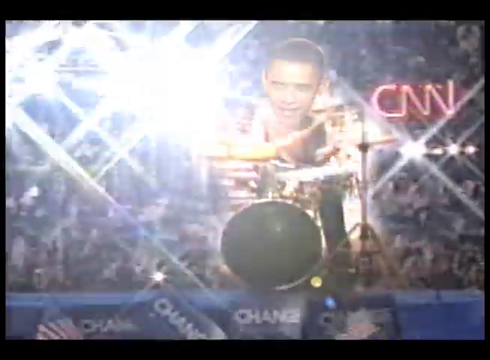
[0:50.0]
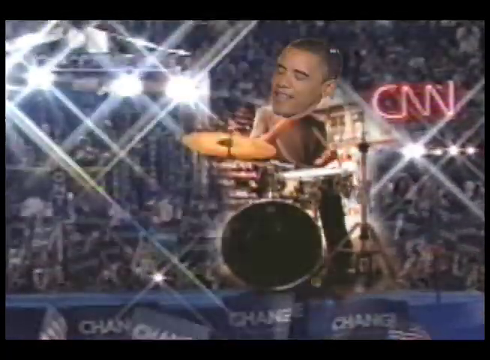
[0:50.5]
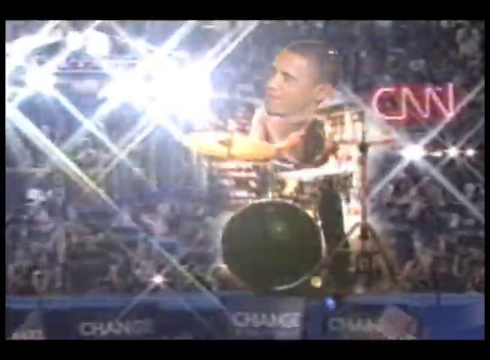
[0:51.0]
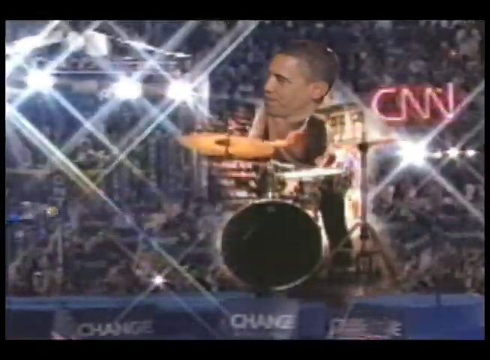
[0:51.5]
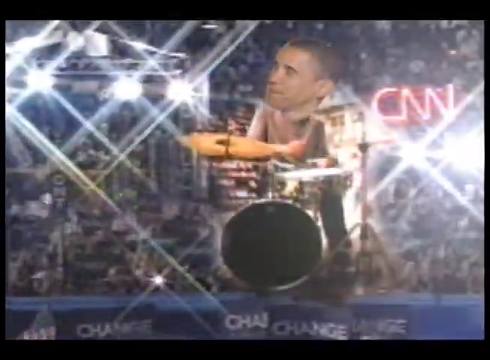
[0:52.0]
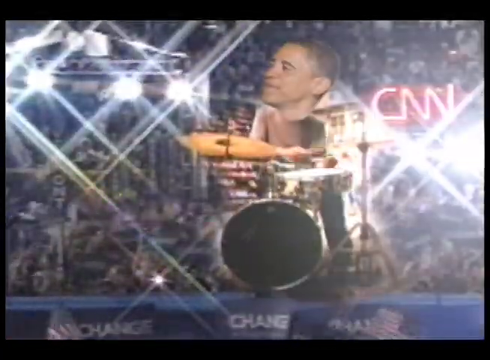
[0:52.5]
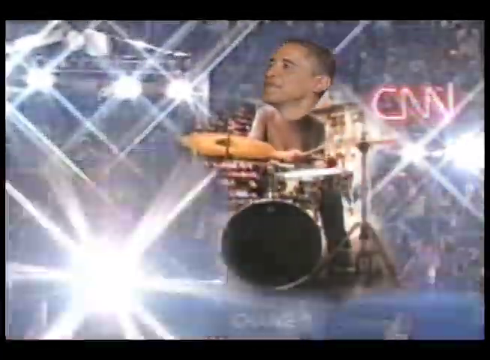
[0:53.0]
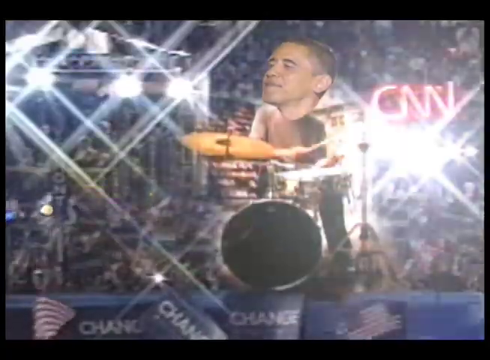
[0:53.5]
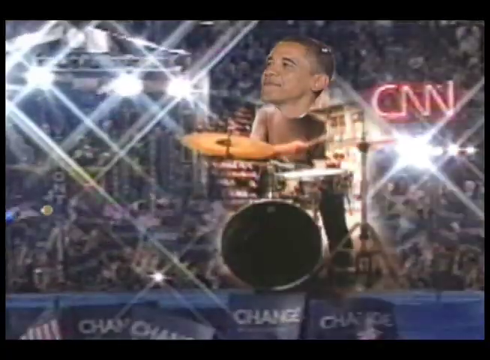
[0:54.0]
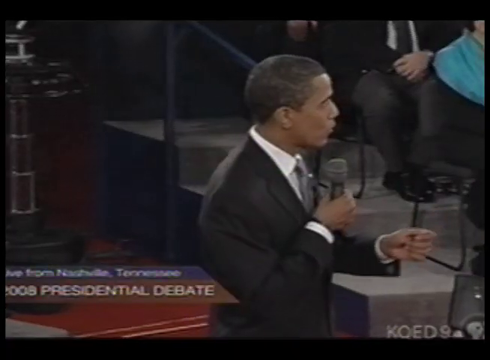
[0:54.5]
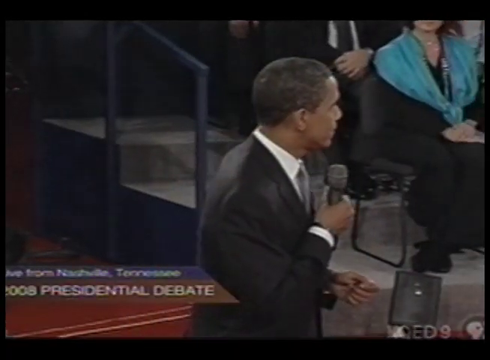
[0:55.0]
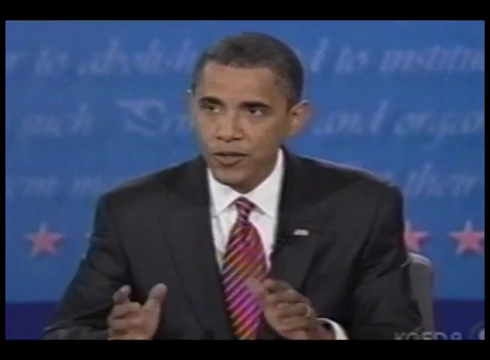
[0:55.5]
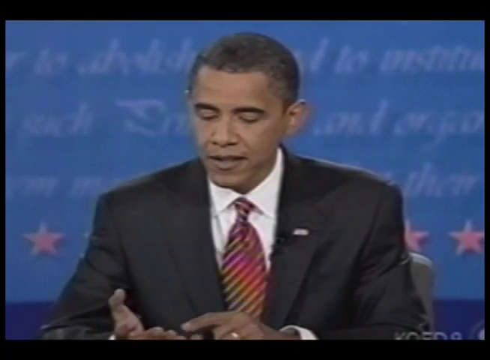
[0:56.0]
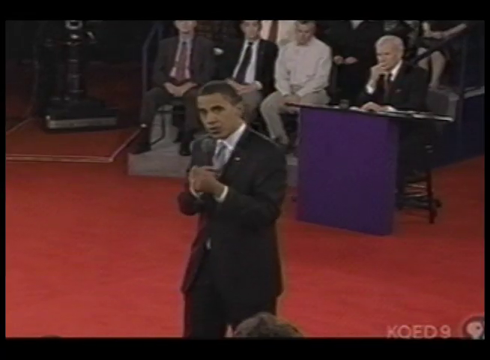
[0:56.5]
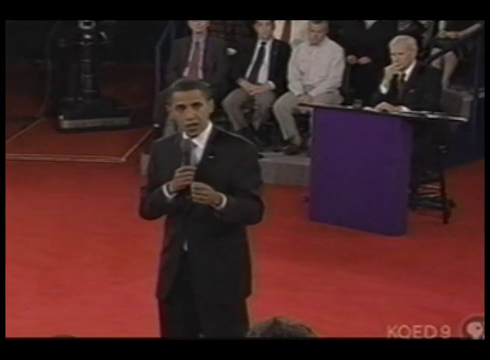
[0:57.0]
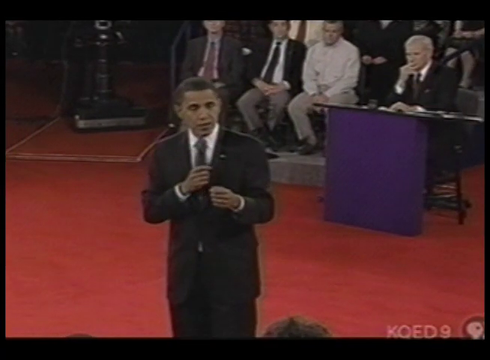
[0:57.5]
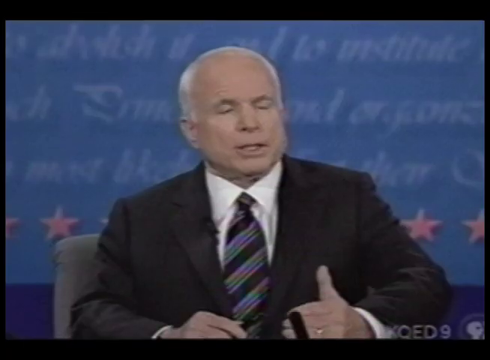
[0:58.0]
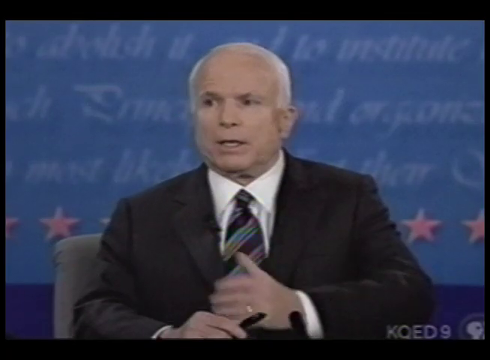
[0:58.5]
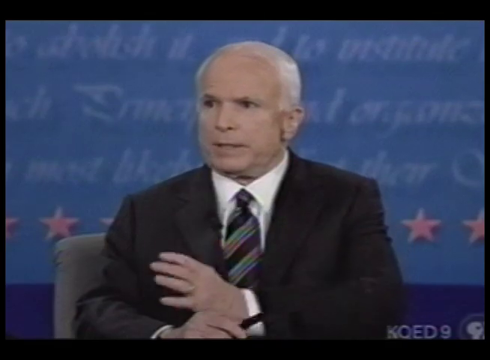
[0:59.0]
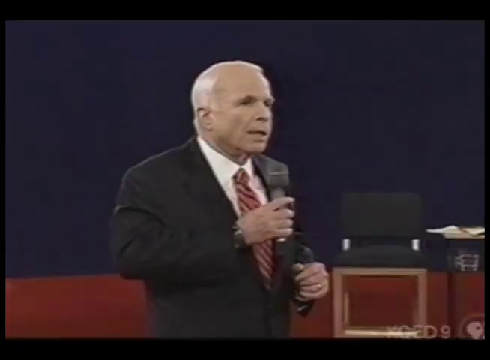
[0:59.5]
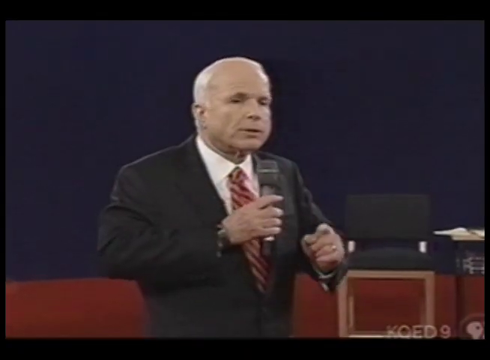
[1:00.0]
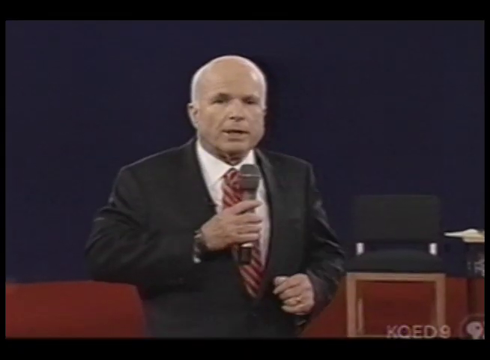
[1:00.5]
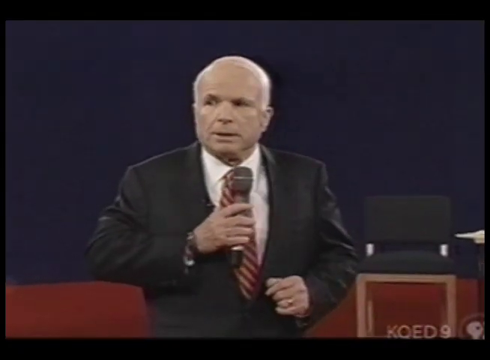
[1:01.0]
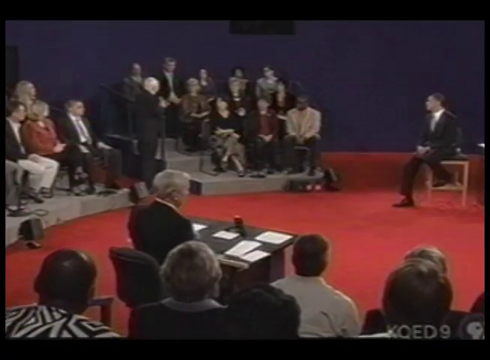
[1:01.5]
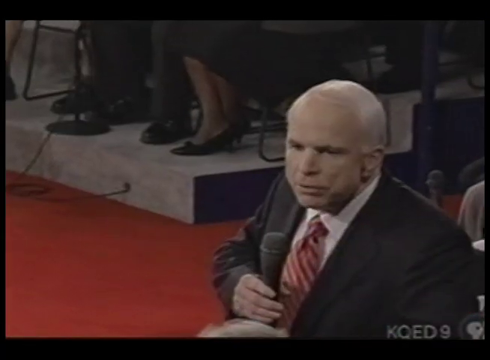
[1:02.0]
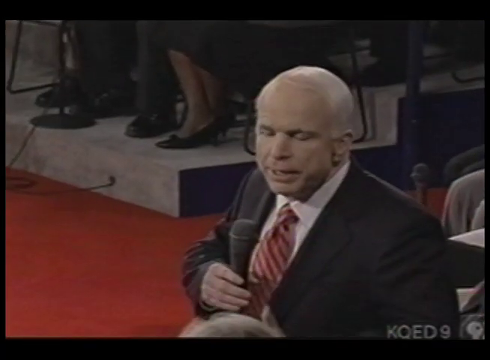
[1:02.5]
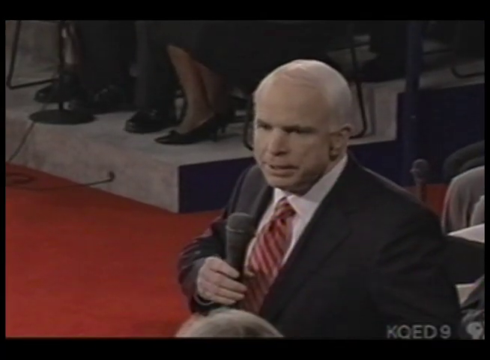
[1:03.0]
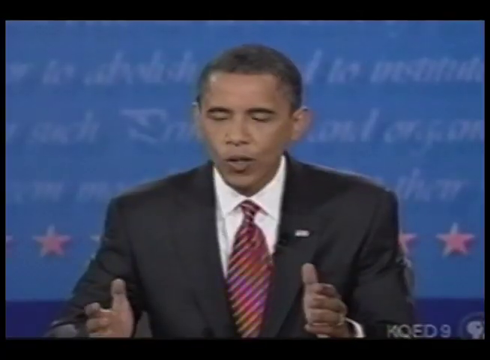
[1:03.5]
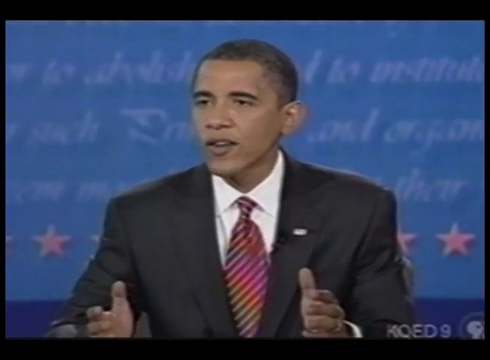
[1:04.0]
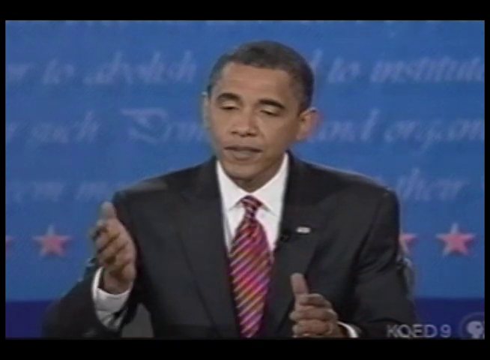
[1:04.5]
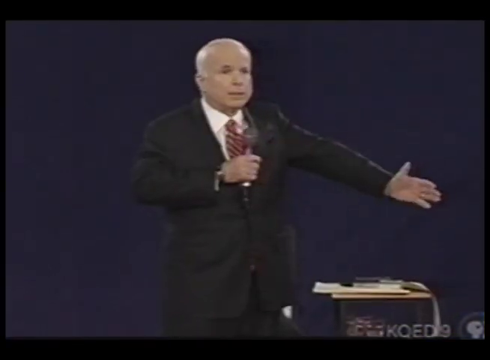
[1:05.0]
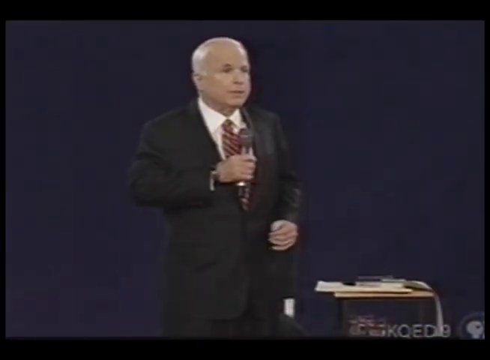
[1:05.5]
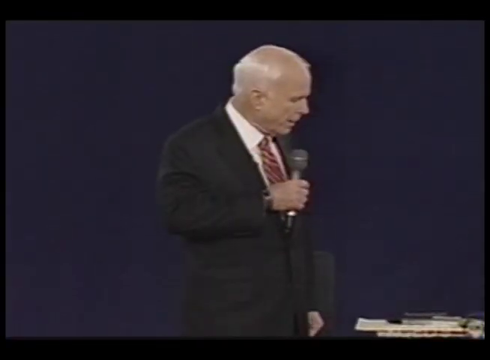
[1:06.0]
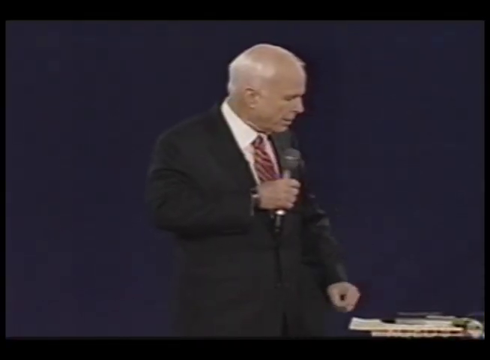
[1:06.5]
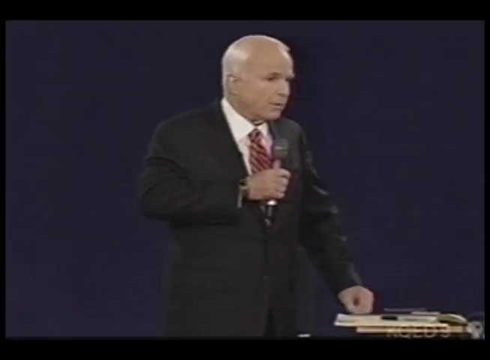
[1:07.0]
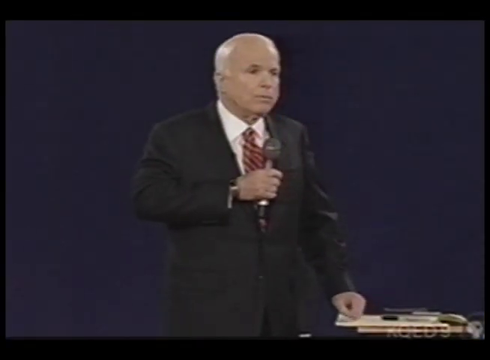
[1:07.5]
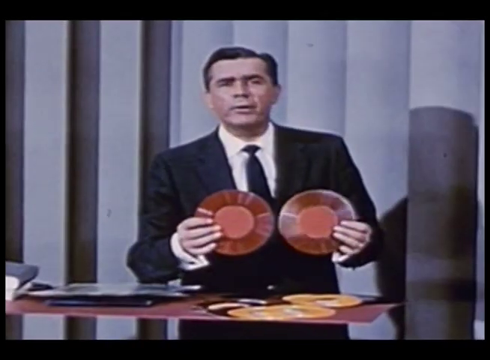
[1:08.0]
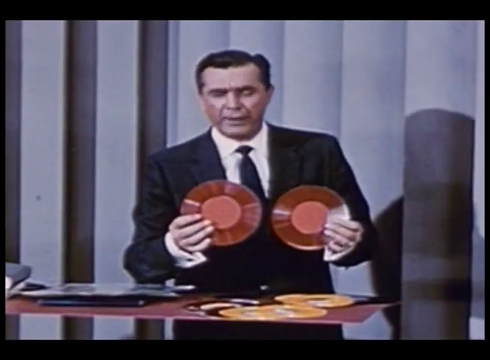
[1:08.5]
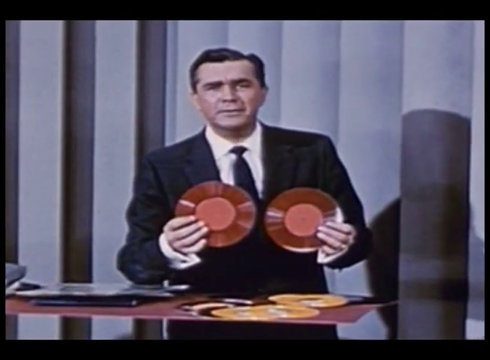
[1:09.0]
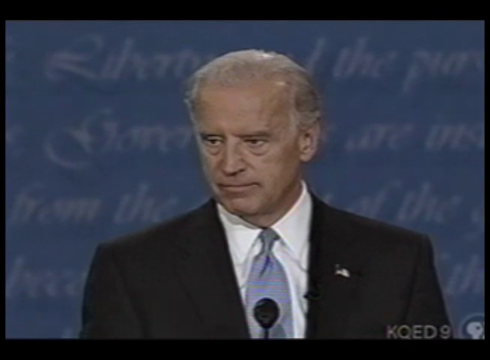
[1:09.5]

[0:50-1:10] The face of Obama is superimposed over a drummer who is actually playing the drums, set against the convention backdrop with people waving flags and cheering. The video cuts back and forth to shots of Obama and John McCain standing in town hall-type settings, holding microphones as if debating. Both are dressed formally in suits and ties, talking to people, and look like they are campaigning. There is also a short black-and-white clip of an old-fashioned man holding up two old-fashioned record discs. After several cuts between McCain and Obama and the man with the records, Joe Biden appears at the end.